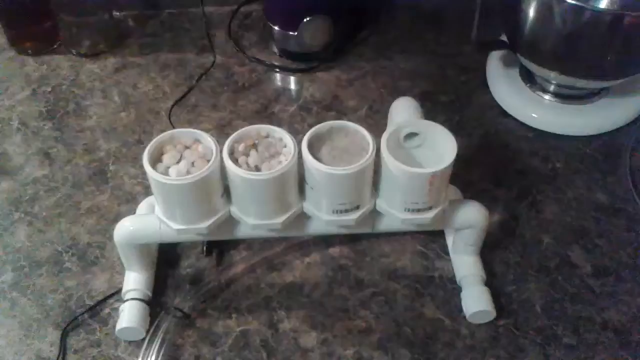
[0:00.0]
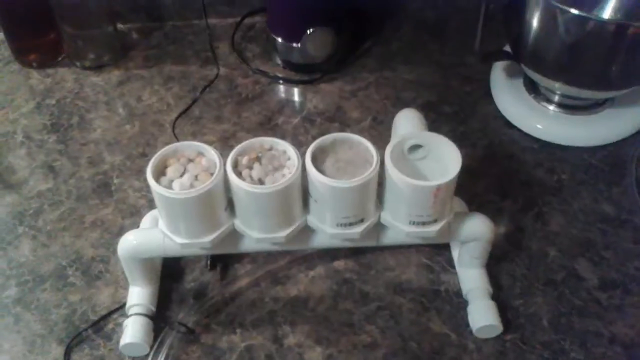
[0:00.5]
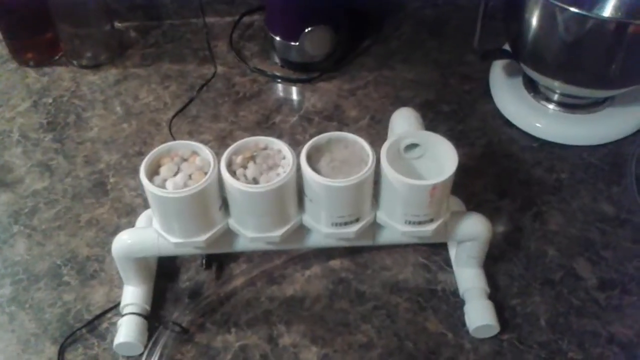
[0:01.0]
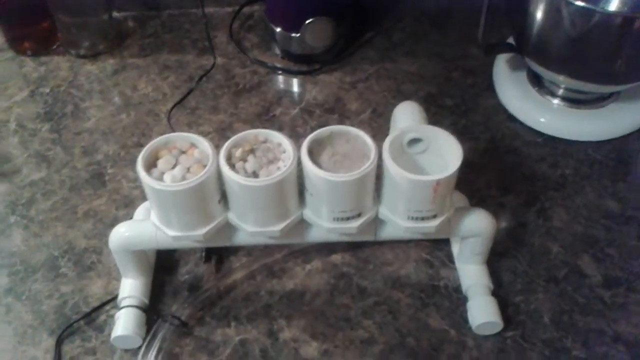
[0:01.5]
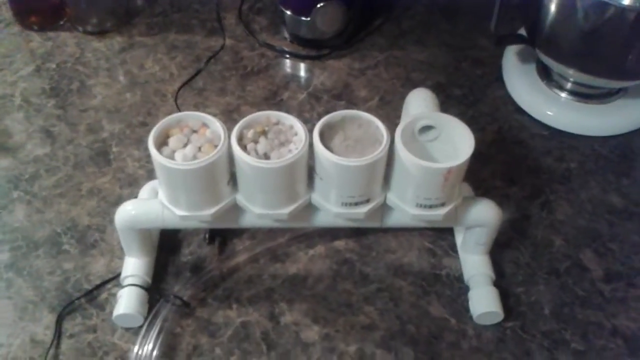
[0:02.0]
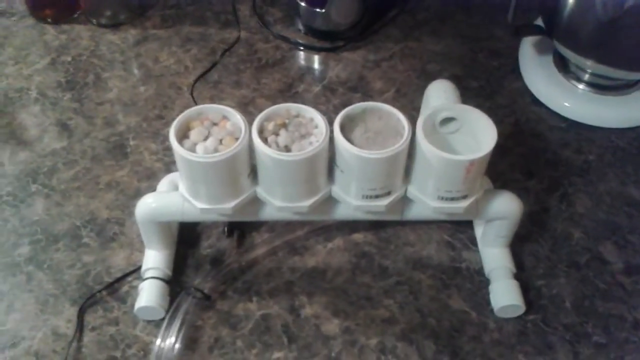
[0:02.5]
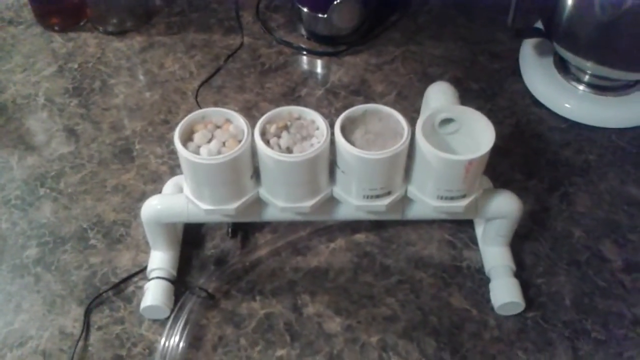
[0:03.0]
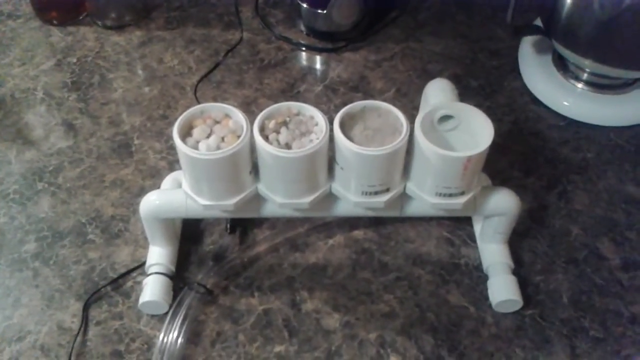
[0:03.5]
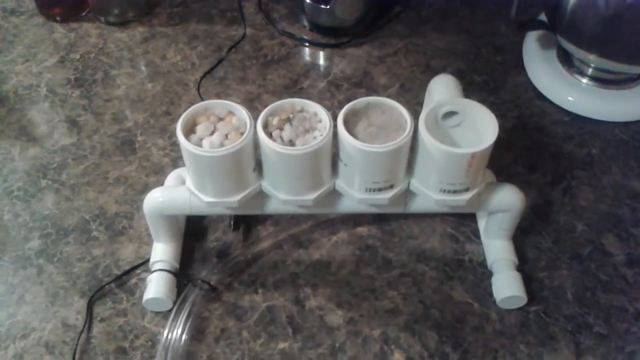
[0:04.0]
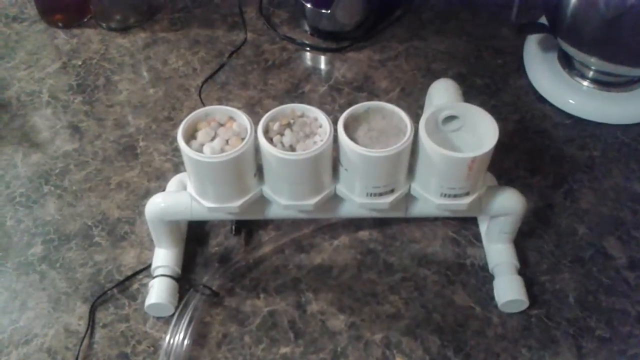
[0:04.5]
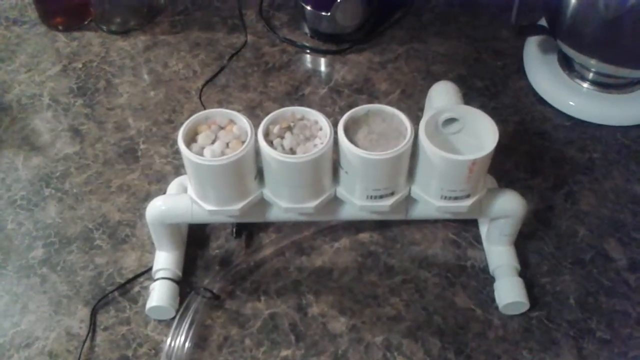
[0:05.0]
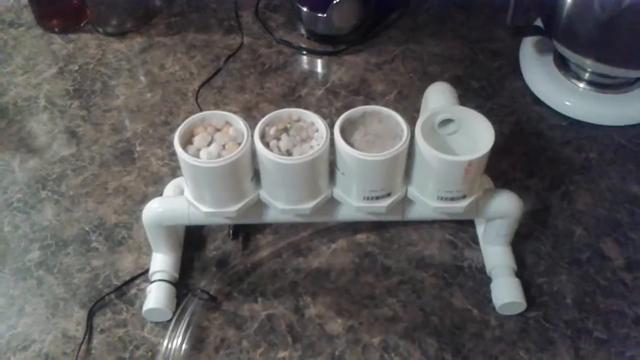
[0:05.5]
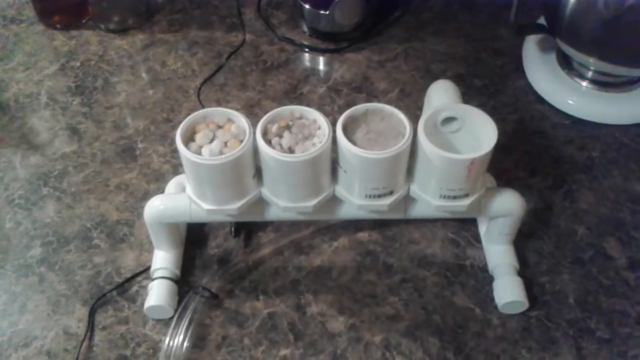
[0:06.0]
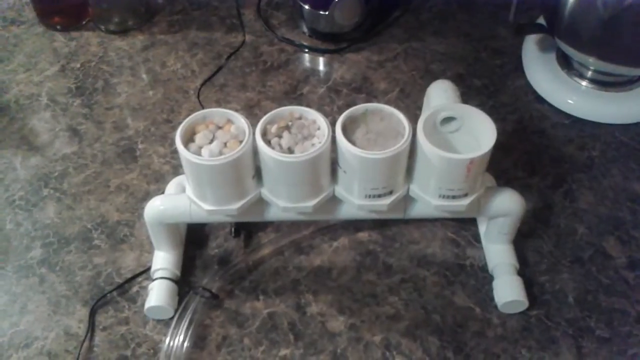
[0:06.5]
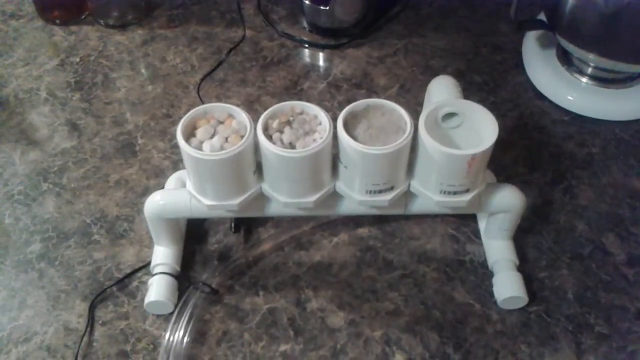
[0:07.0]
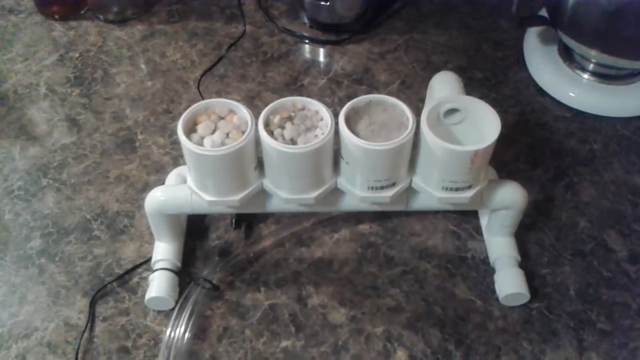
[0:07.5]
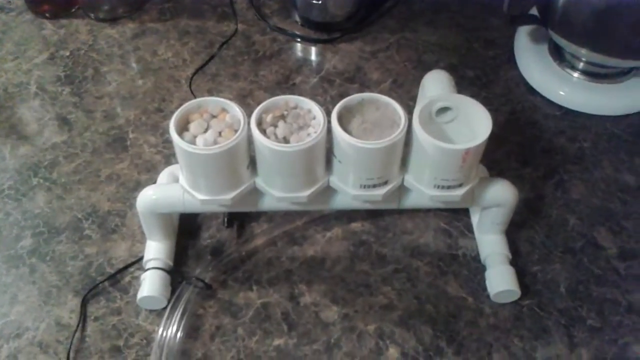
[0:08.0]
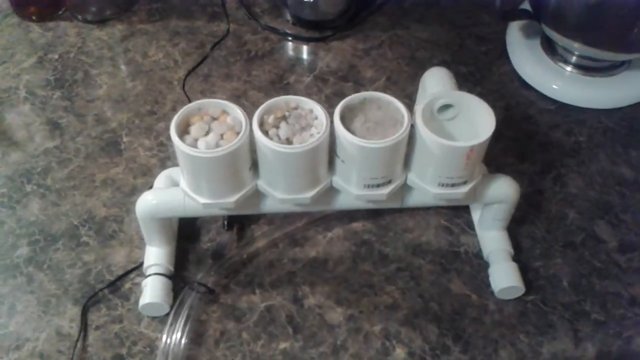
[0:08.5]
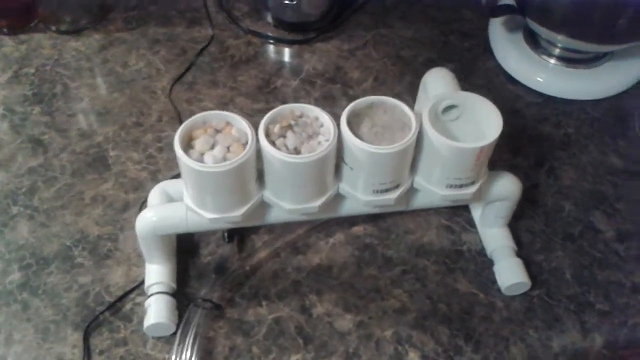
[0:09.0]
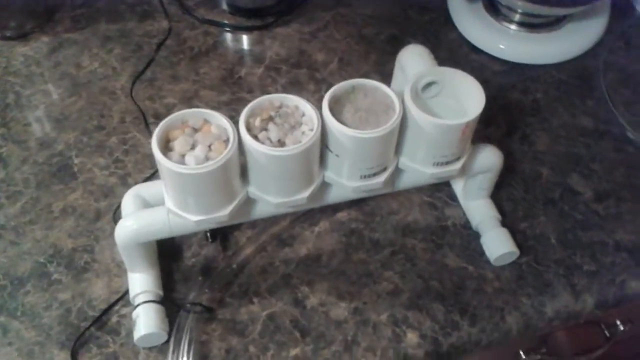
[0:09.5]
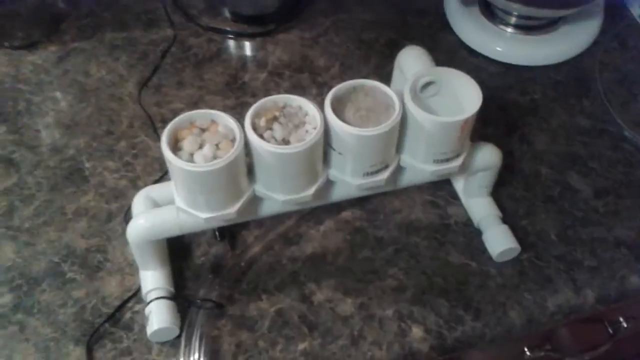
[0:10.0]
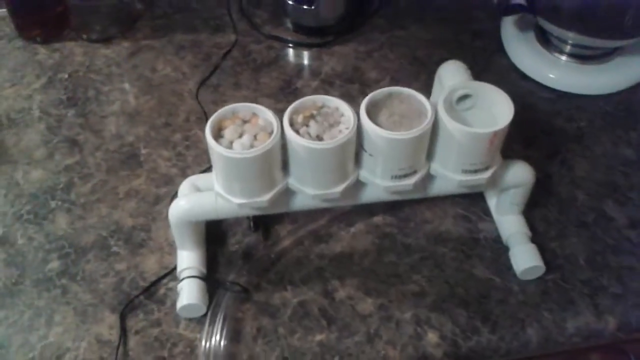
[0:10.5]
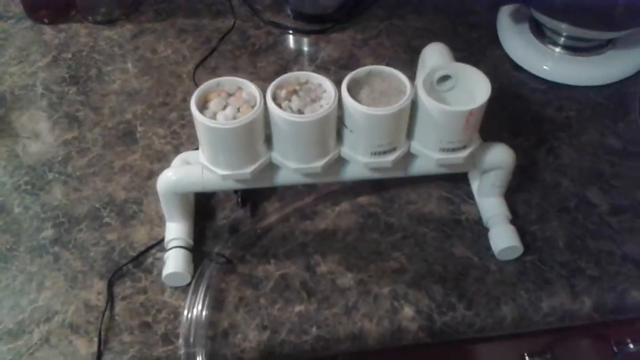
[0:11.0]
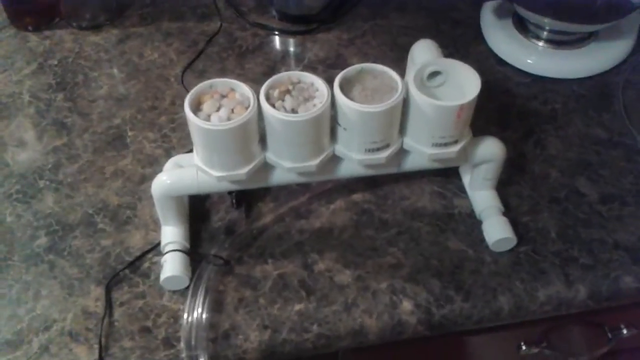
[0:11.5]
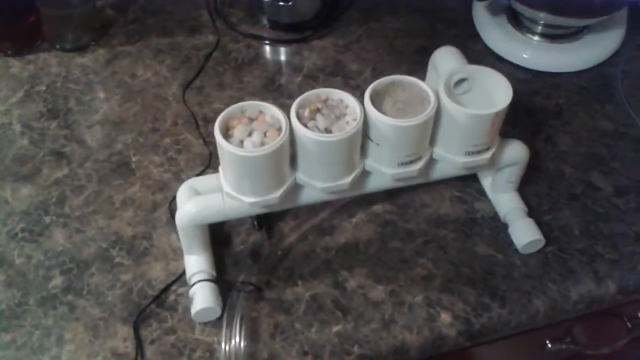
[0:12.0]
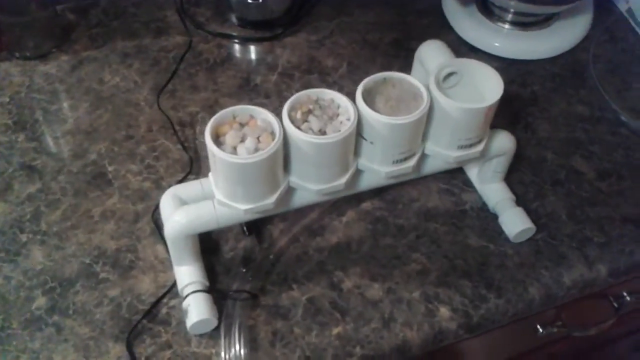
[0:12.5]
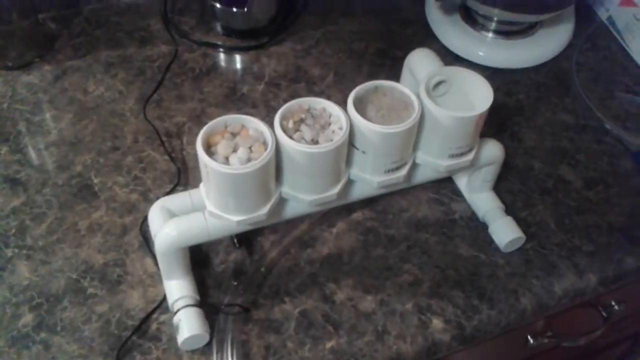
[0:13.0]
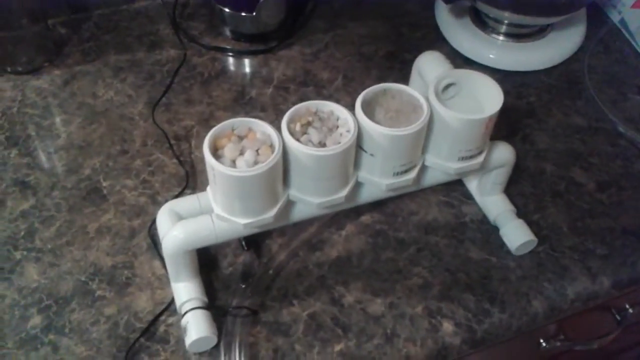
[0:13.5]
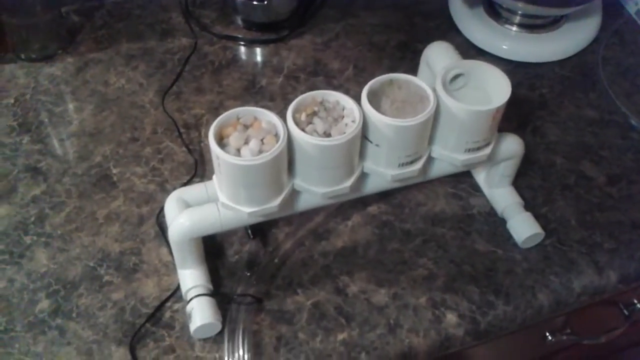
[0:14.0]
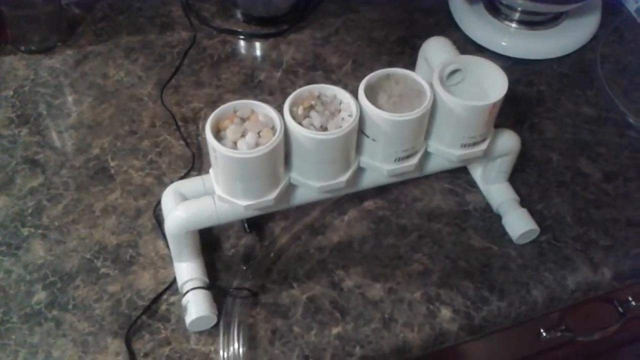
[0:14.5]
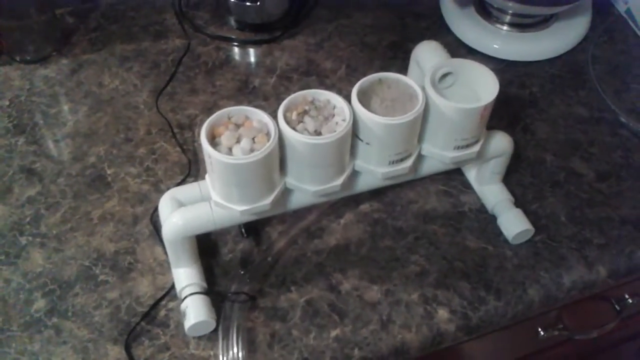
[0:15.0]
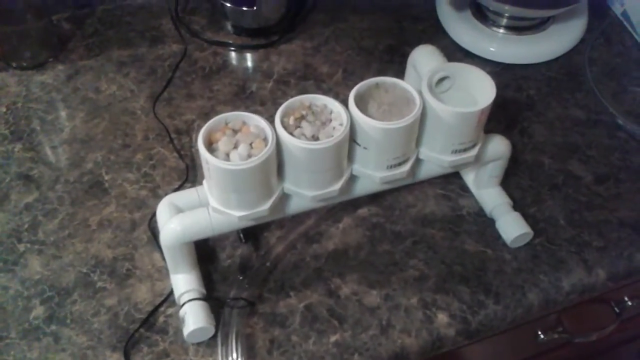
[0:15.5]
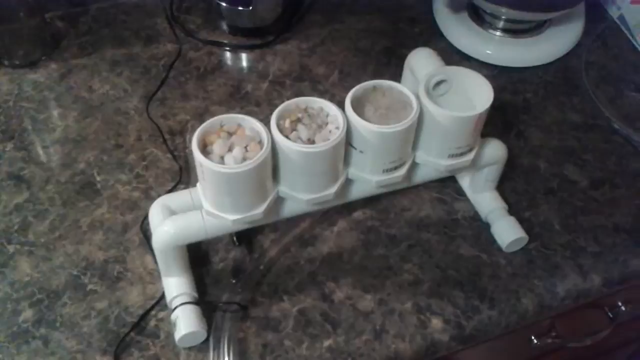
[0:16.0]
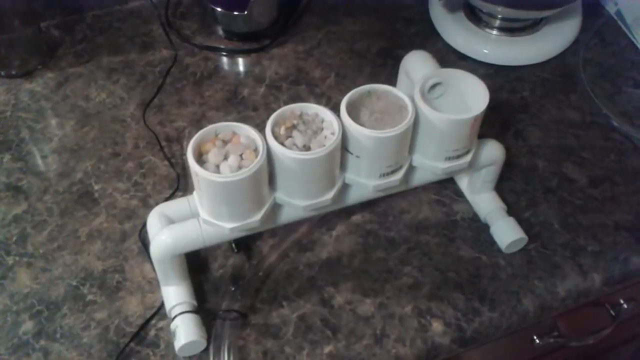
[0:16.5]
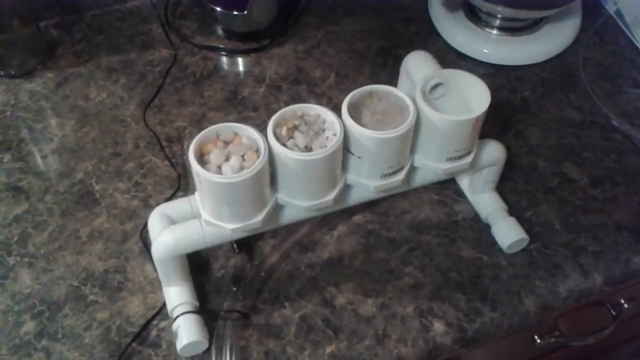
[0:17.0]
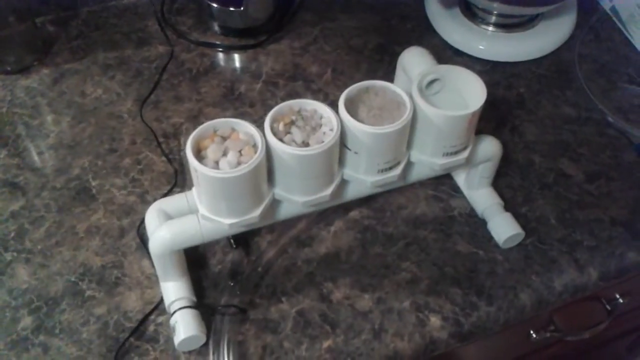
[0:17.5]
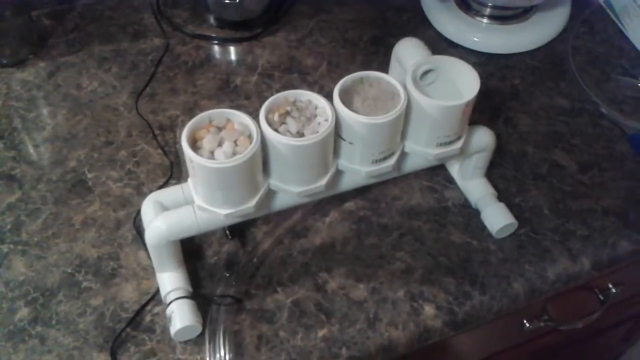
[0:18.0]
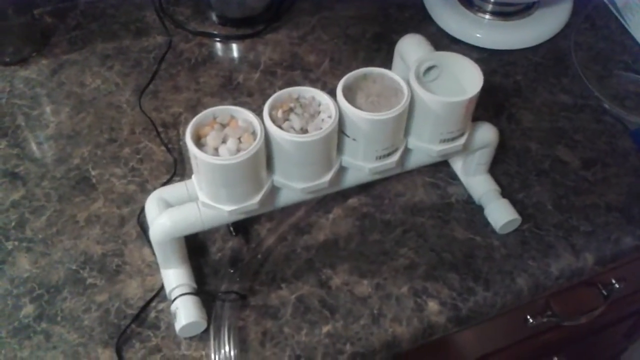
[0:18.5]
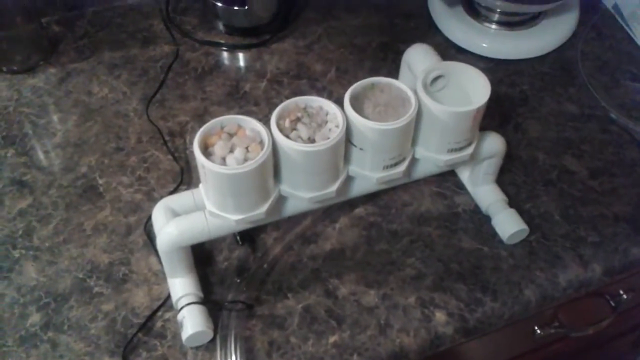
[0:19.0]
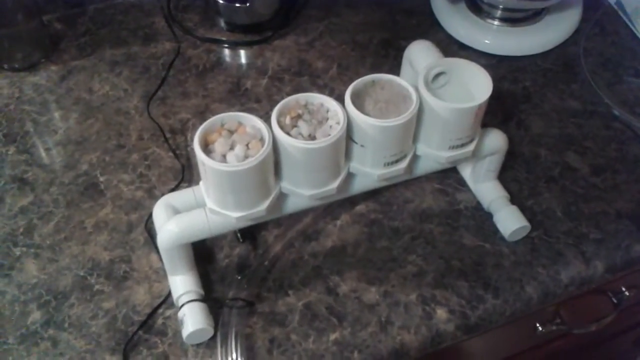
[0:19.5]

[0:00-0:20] In a DIY how-to video, someone shows an unidentified object that looks kind of like a filter, perhaps for an aquarium. It consists of four cups made of something like PVC plastic on a stand that appears to be made of pipes. The one on the left-hand side holds white rocks, another holds smaller ones, and the one next to the smaller rocks looks like it has clay in it. The remaining one is empty and has a pipe coming out the back. Clear plastic tubes come out of the setup, and the round cylinders look to be made of plastic or PVC. A very thin black cord also comes out of it. The setup seems to be on a kitchen counter, since it is next to a KitchenAid mixer.